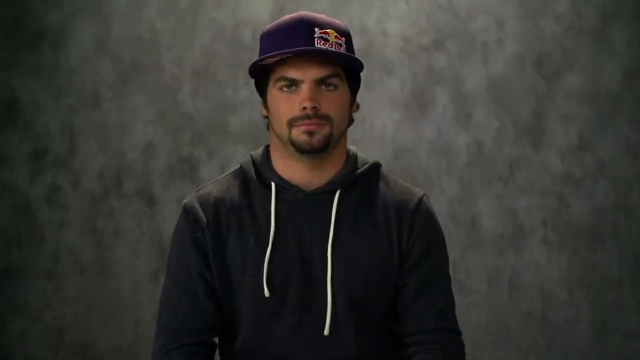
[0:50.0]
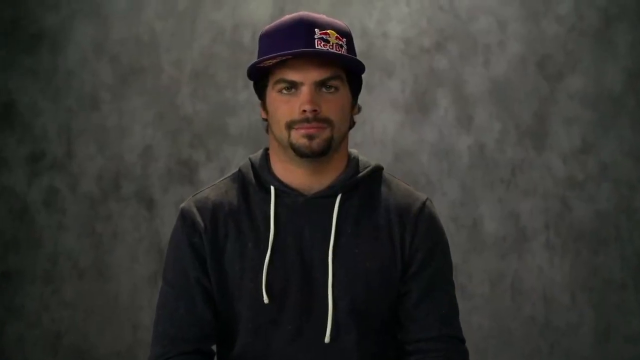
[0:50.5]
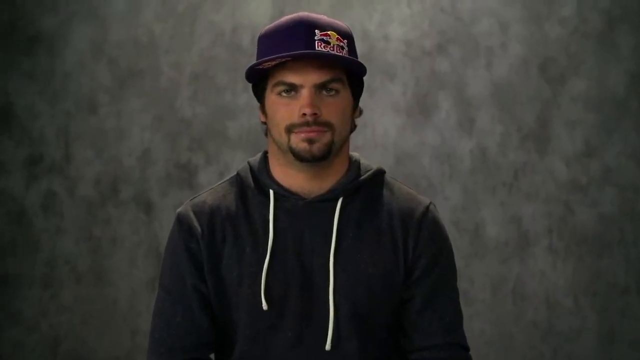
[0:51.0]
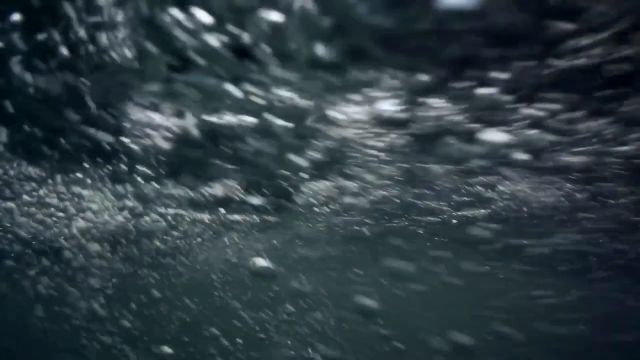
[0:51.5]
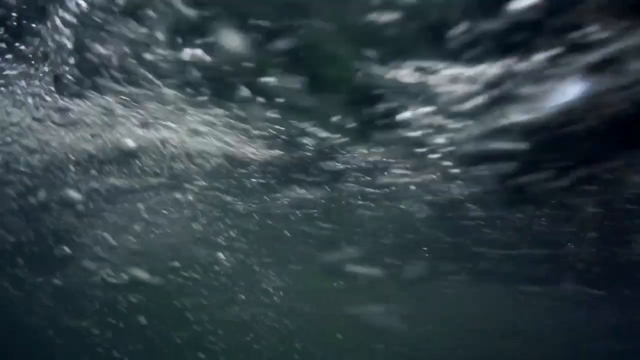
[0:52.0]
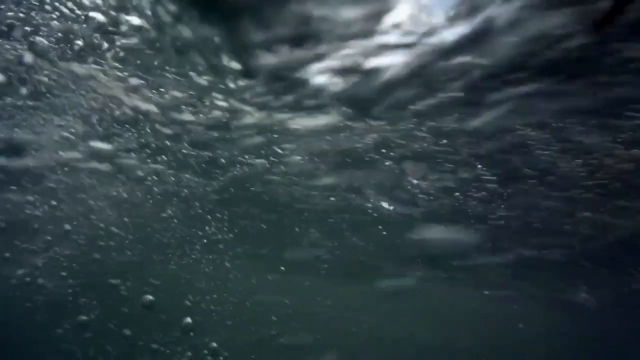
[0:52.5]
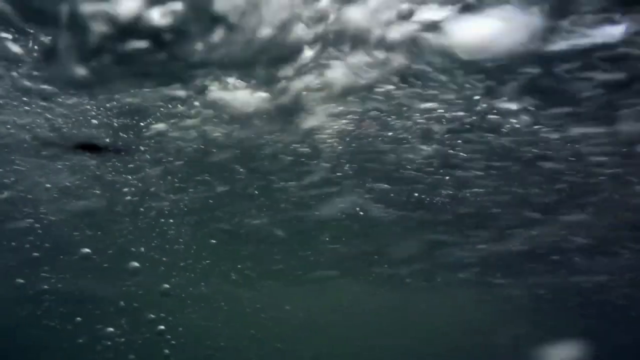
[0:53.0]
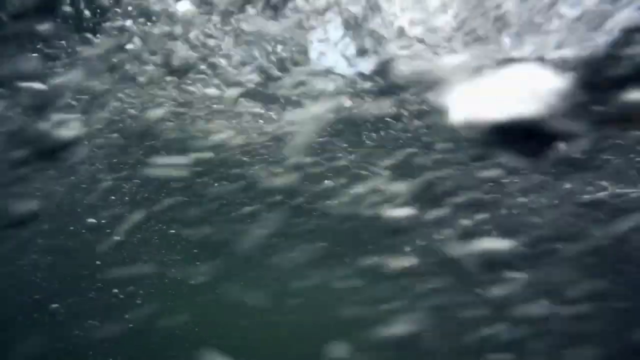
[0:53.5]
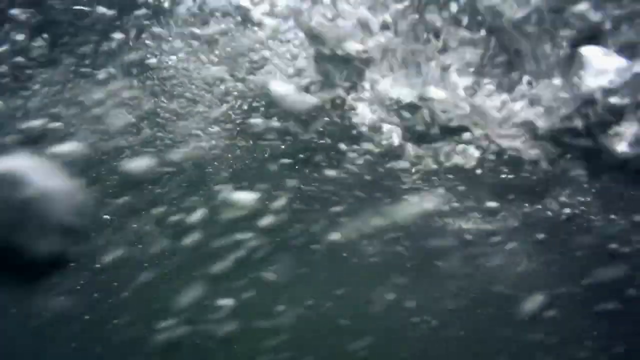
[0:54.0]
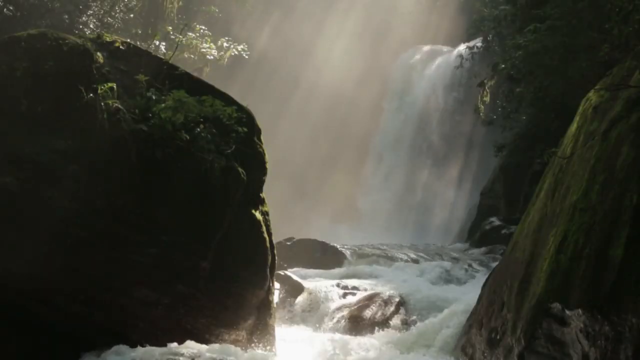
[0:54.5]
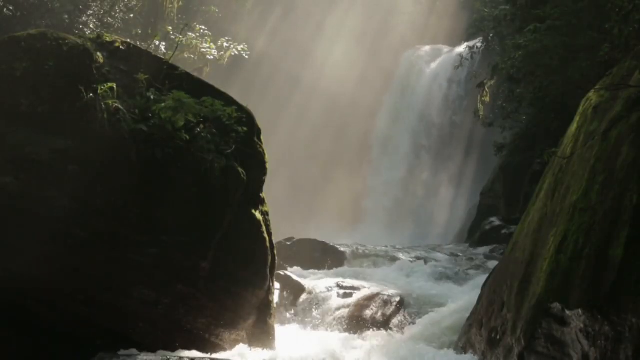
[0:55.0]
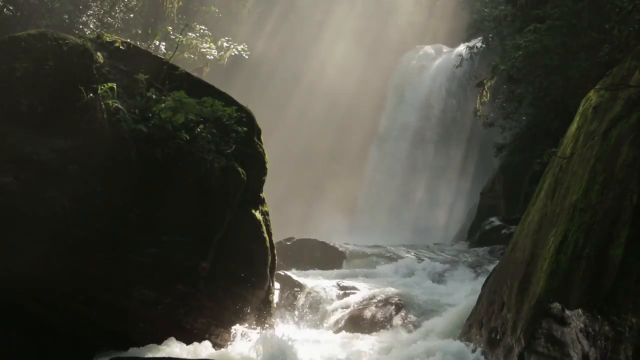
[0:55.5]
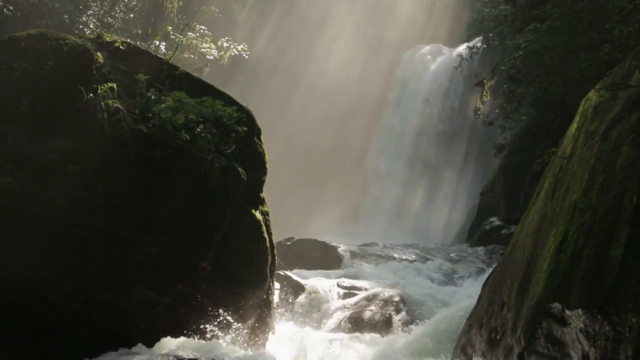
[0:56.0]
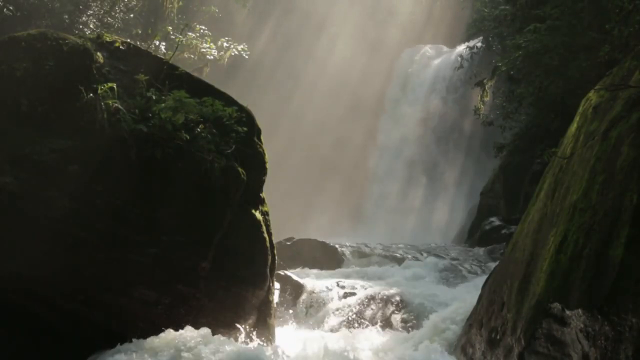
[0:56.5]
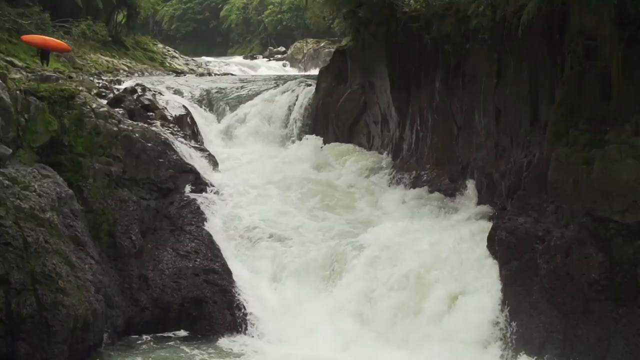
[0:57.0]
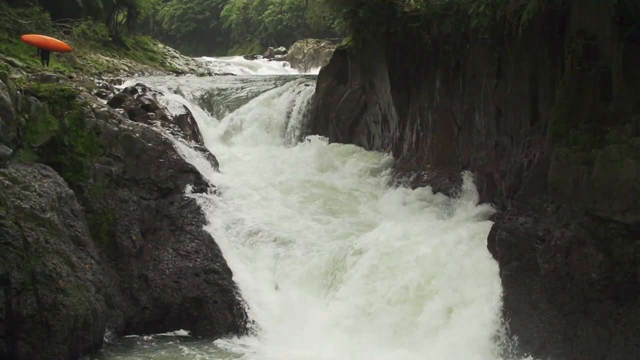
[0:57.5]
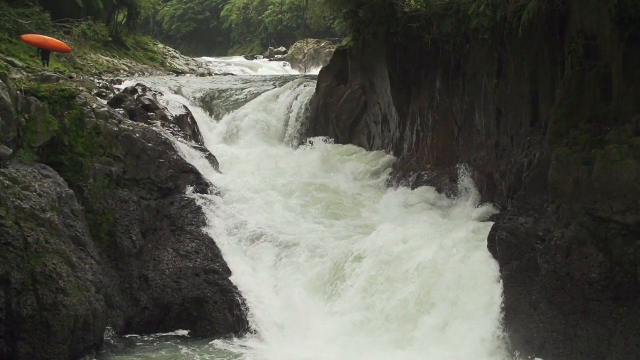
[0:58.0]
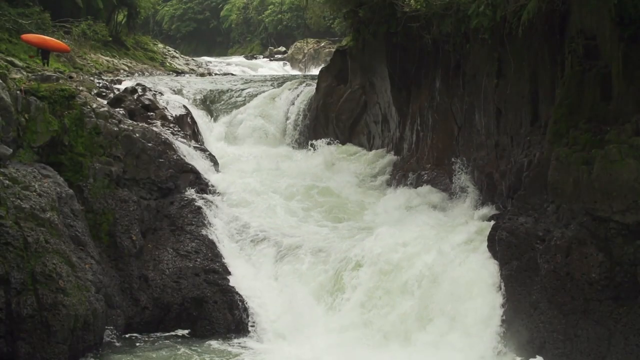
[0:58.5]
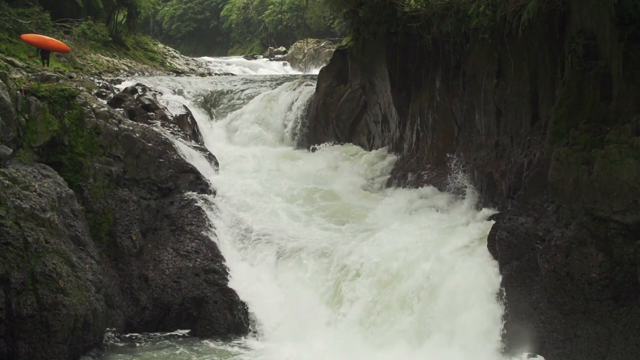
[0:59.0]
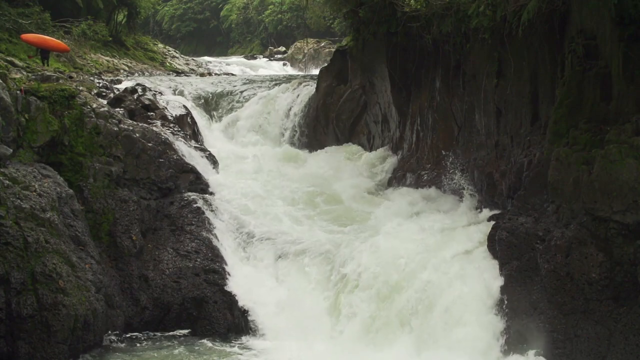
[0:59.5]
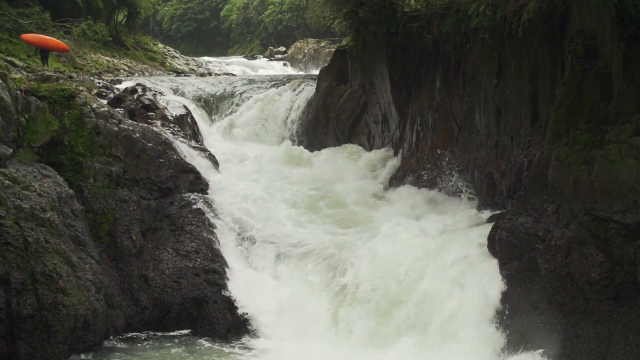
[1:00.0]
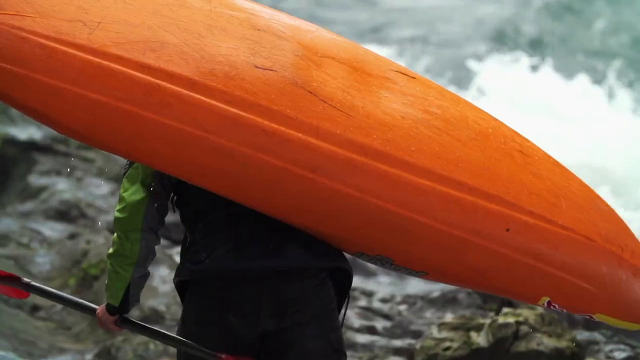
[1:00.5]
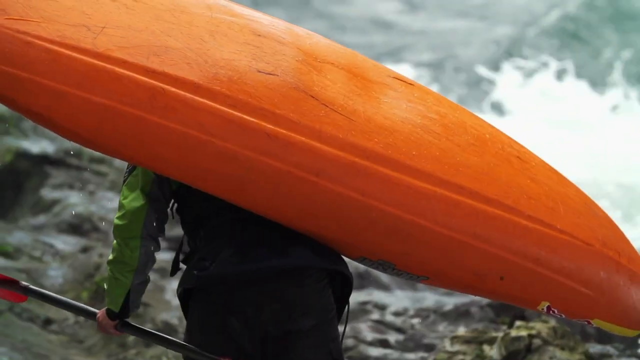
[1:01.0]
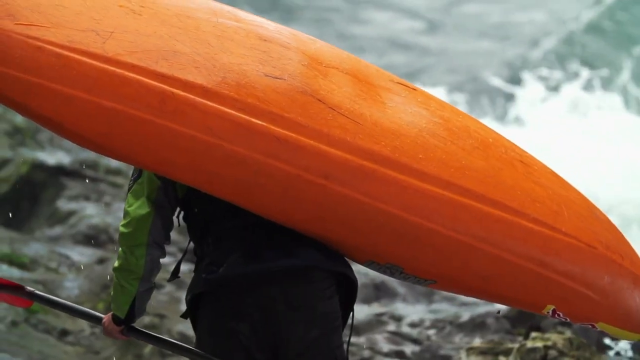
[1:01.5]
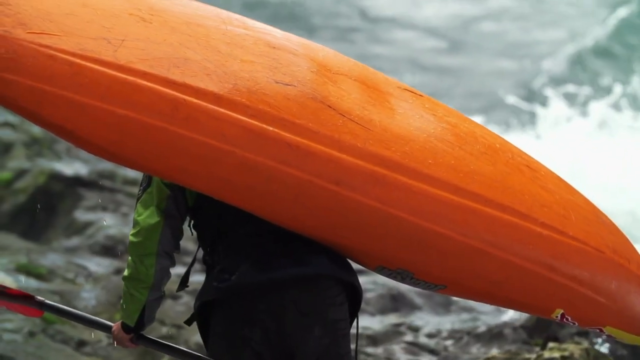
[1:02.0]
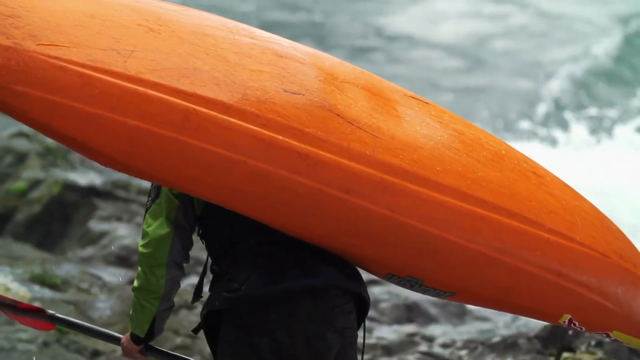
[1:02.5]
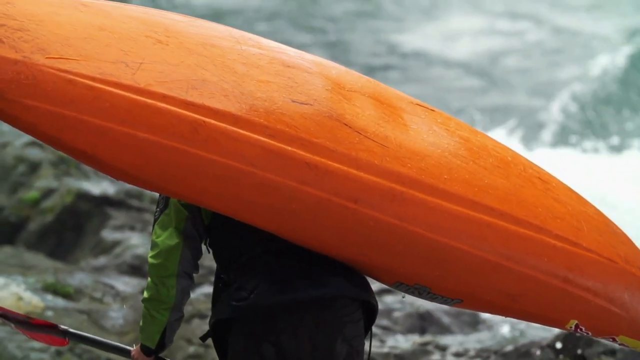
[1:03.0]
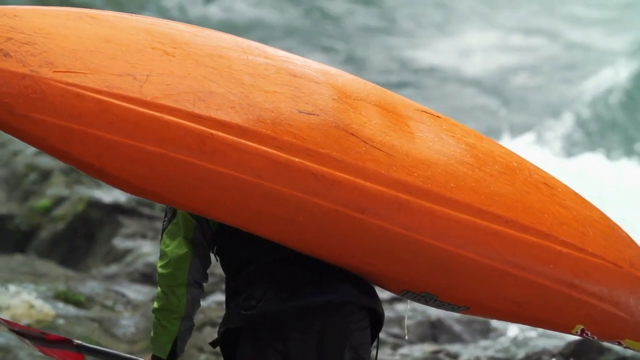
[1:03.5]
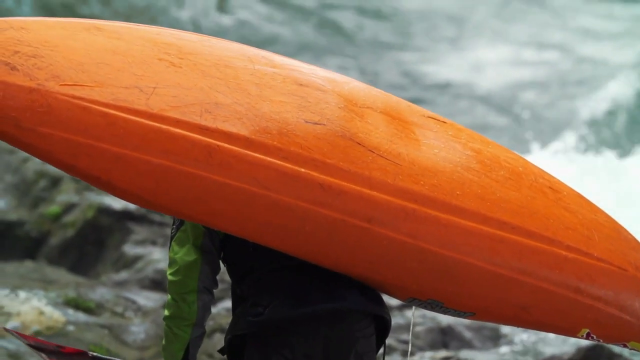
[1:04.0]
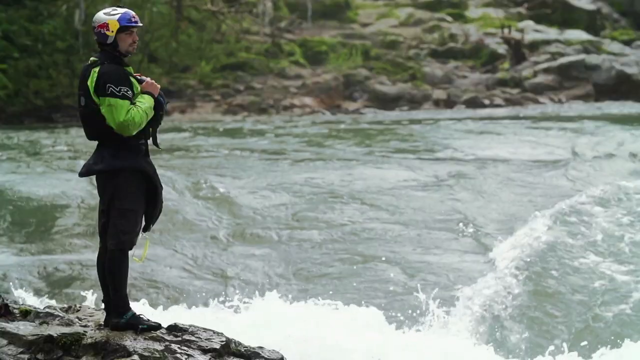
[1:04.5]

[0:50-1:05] In what appears to be a studio-style setting, a young man sits against a gray wall, staring toward the camera. He wears a dark gray hoodie and a purple hat with the Red Bull logo on it. A Red Bull logo is in the bottom right corner of the screen throughout the video. White cascading water flows off a waterfall and through a very foamy river whose waters appear tumultuous, raging very fast and forming heavy white foam. Various shots show the man carrying a bright orange kayak on his shoulder as he walks along the edge of the river, and one shot shows him standing at the edge of the waterfall looking out at the water. Subtitles at the bottom concern kayaking and the view and sounds of the river.